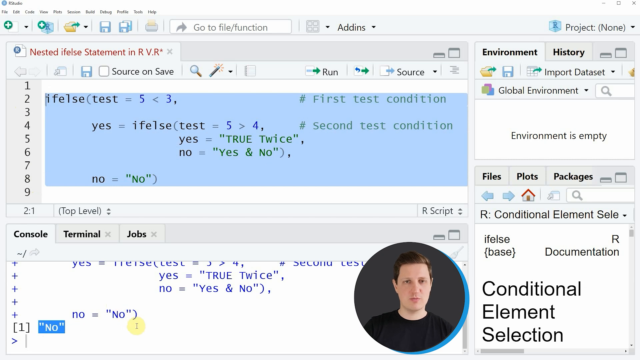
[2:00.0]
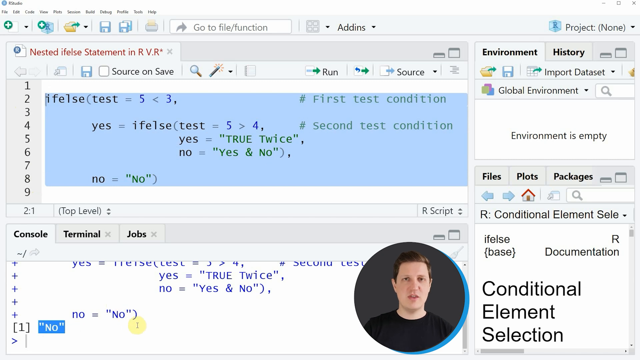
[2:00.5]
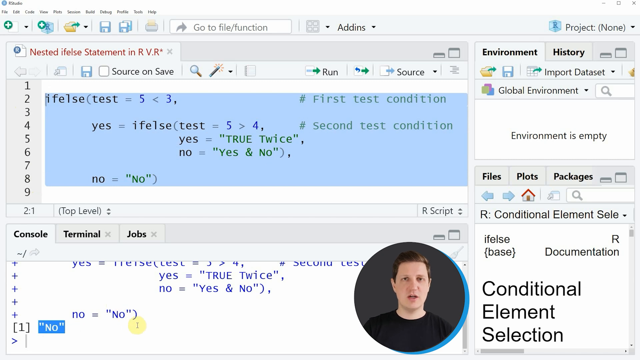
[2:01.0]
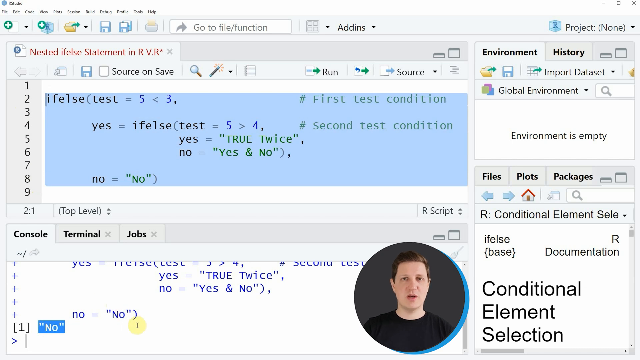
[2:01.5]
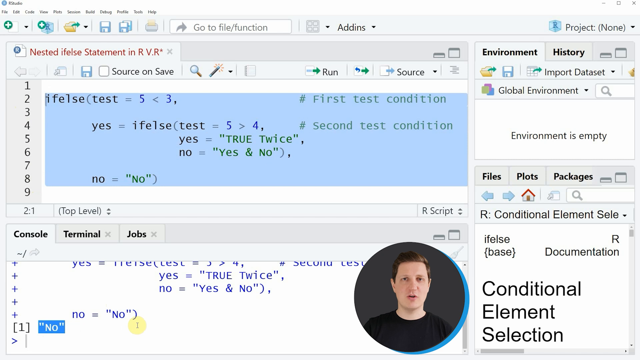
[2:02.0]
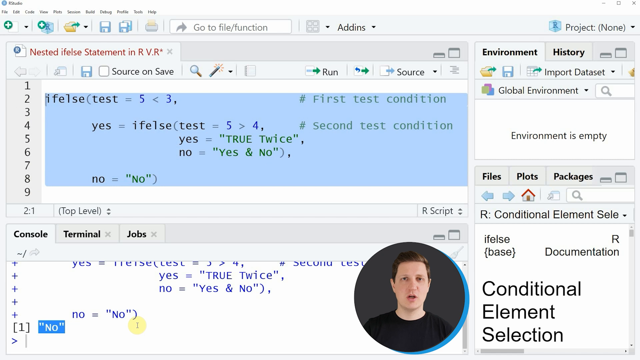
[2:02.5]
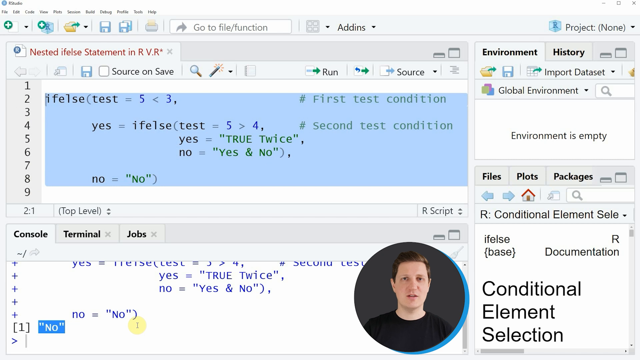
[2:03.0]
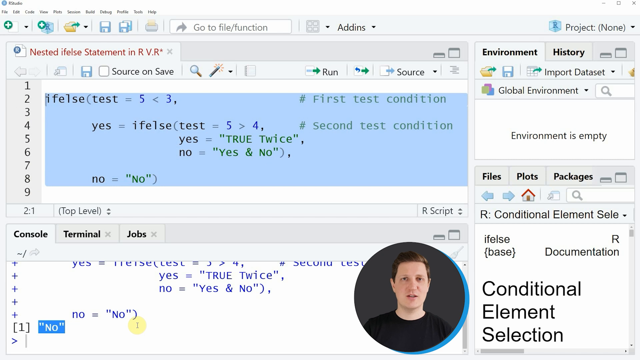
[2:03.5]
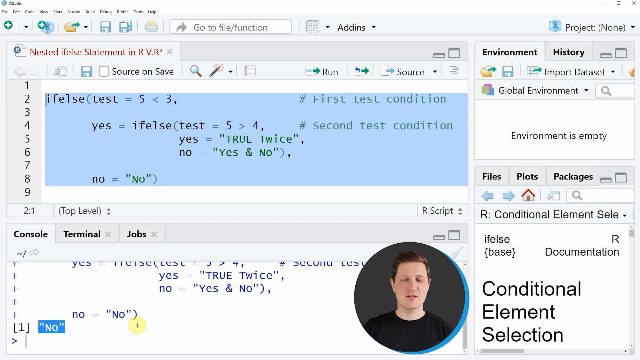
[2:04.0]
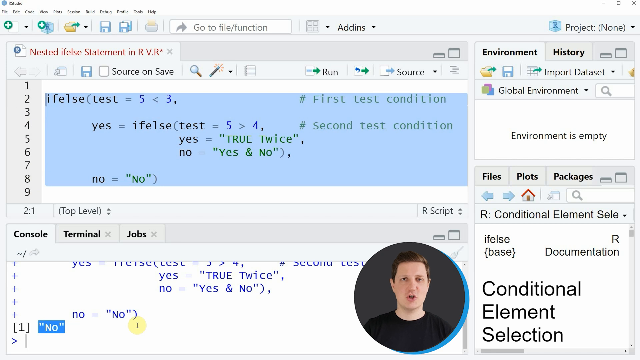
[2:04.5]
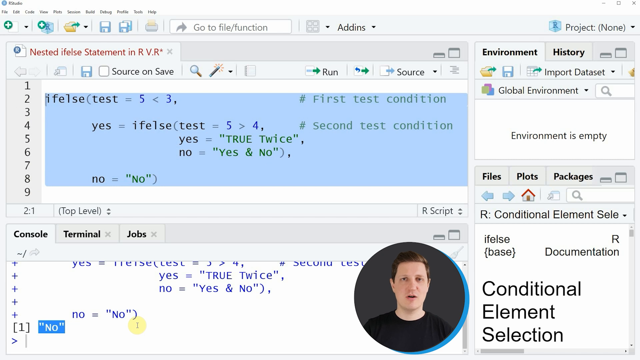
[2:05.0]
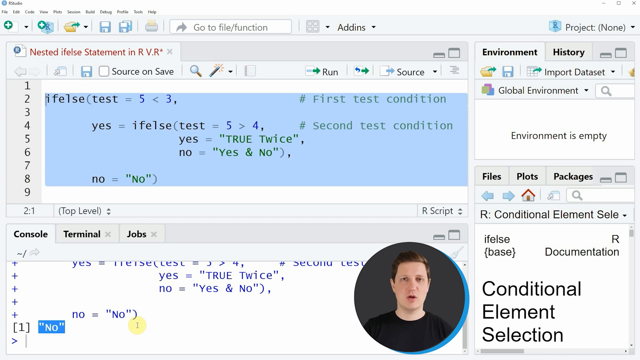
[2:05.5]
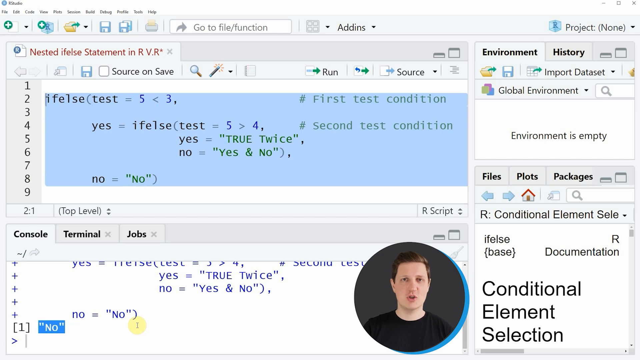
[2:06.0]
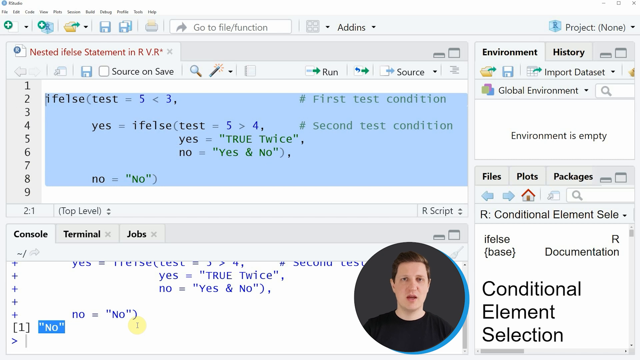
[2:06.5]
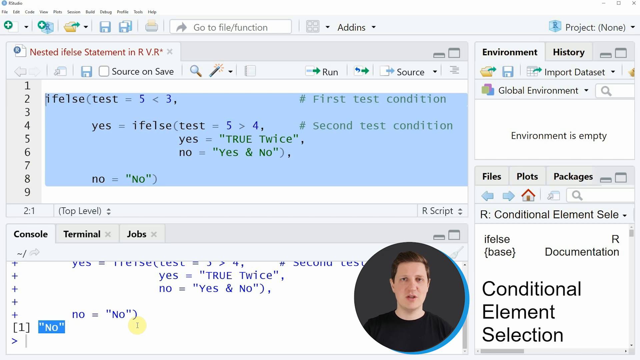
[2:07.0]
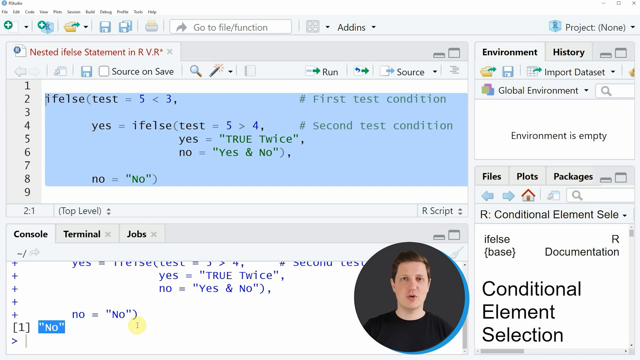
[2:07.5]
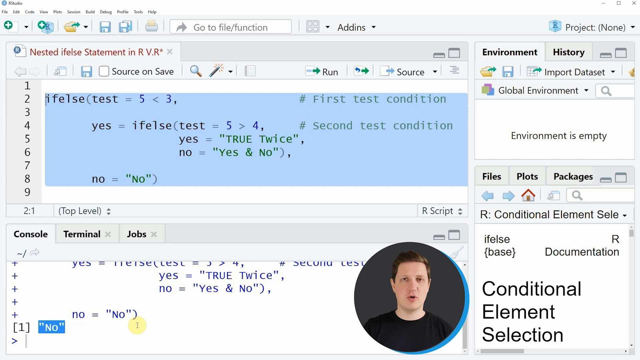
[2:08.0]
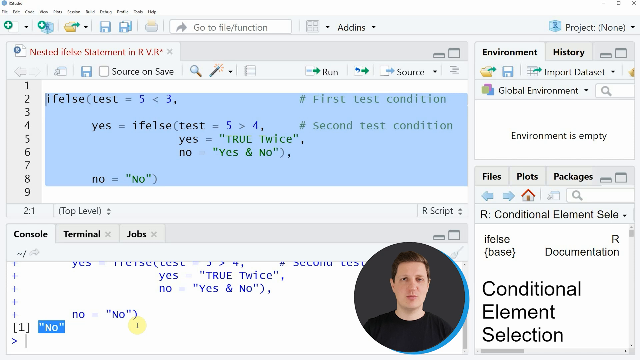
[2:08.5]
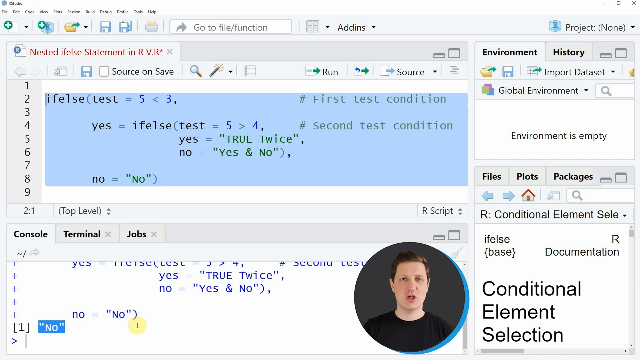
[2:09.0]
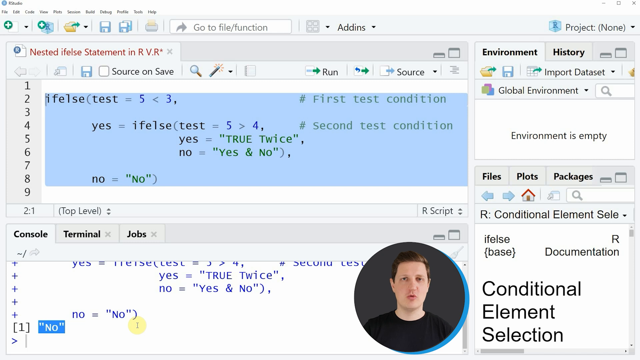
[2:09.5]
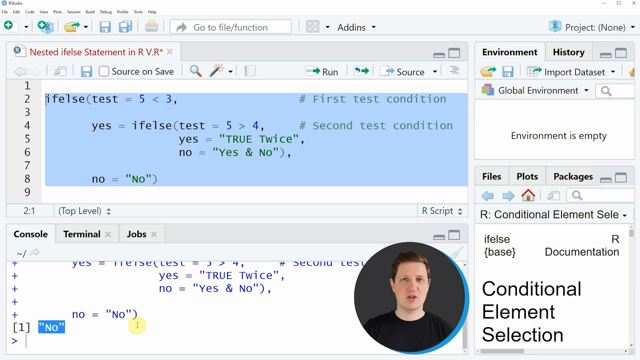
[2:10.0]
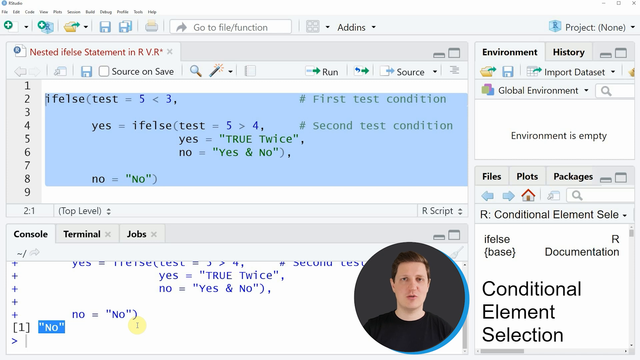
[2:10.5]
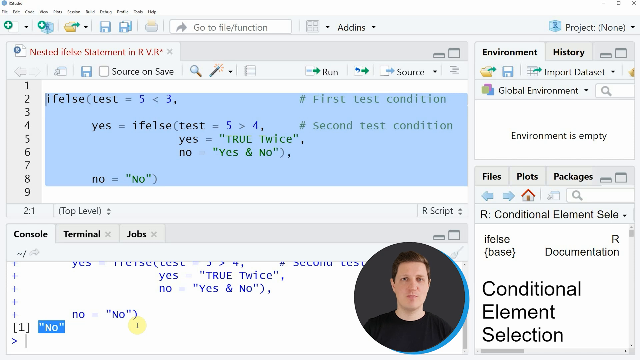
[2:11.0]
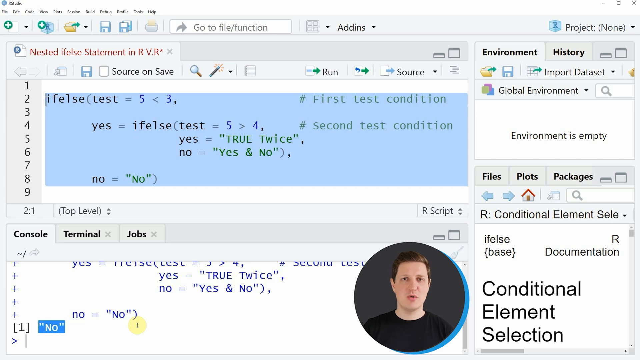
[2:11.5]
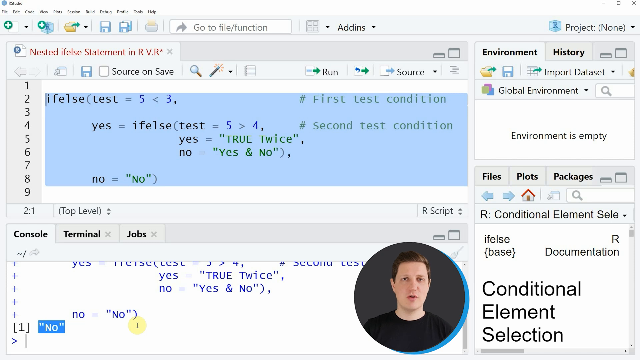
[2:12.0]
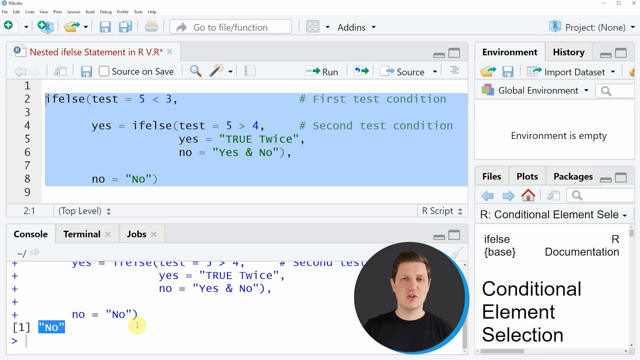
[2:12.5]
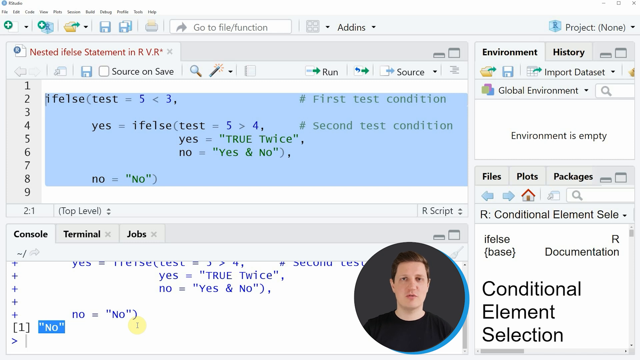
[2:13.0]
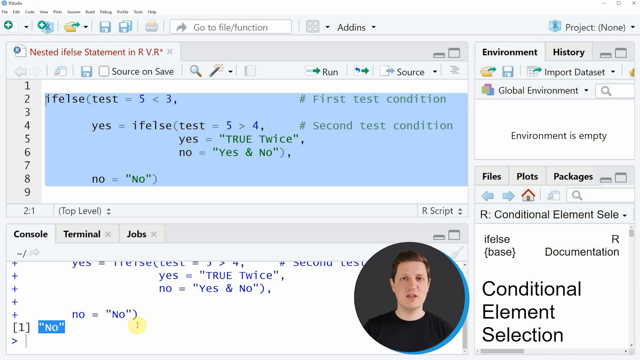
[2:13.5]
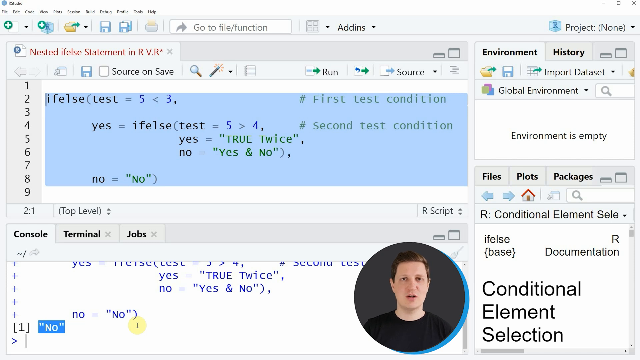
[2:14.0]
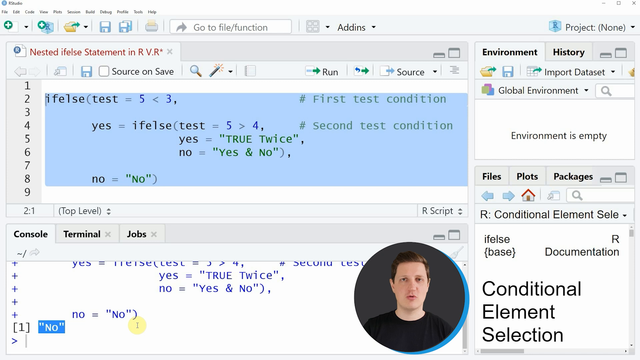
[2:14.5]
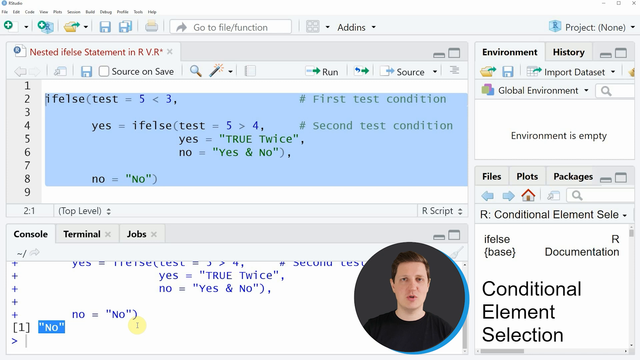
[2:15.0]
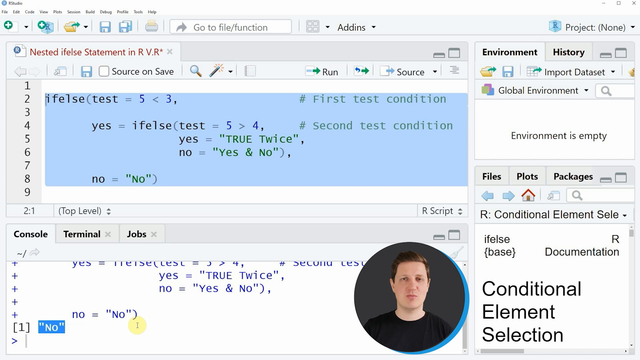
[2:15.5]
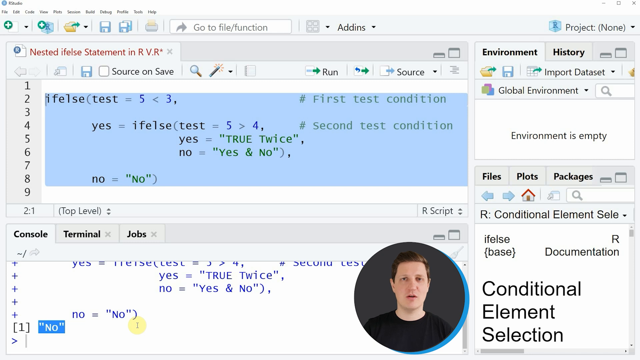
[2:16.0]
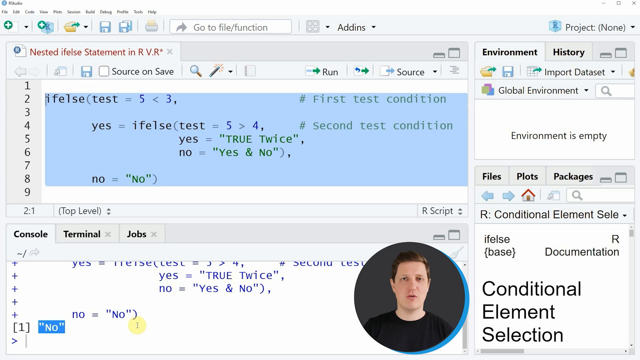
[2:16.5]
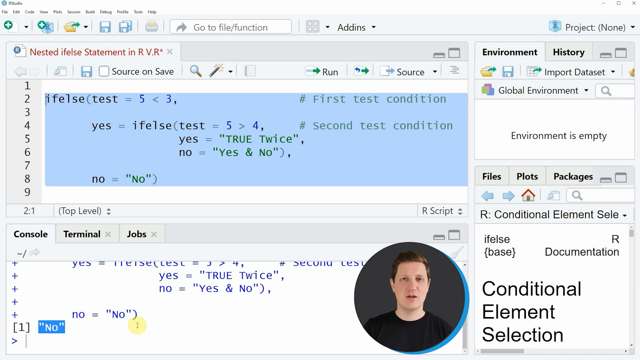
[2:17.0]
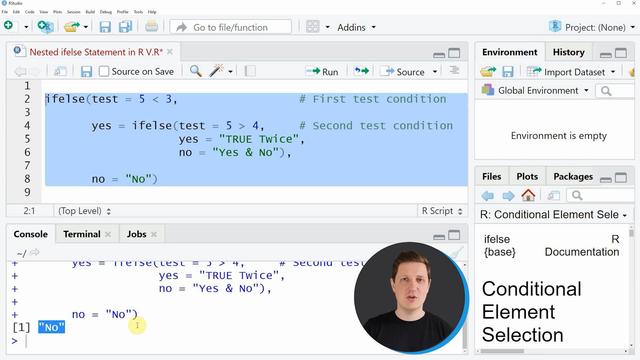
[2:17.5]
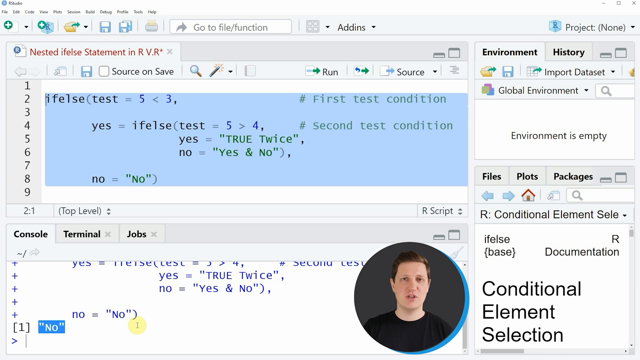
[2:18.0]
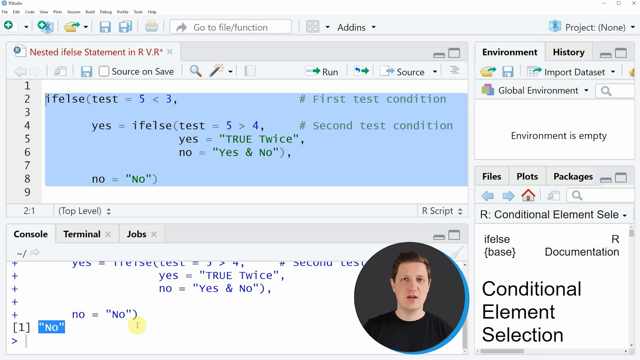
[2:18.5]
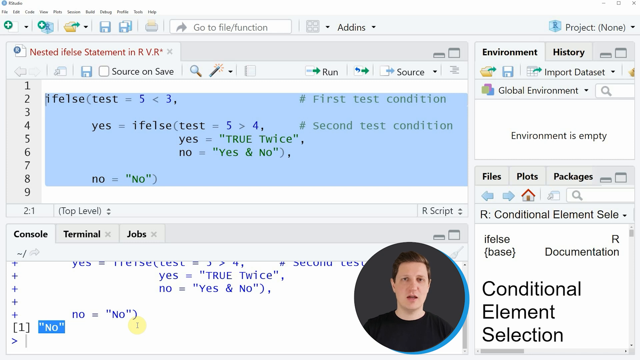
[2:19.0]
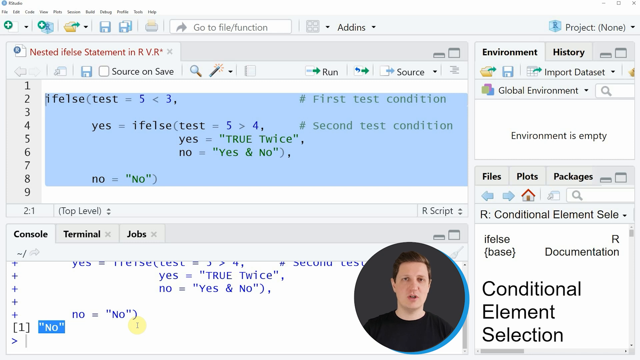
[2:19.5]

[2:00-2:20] Lines 2 through 8 in the nested ifelse statement in R V.R panel are selected and highlighted in light blue. In the console panel at the bottom left of the screen, the text "no", in quotes, on the last line is highlighted in blue. In the circle frame at the bottom right, the man is speaking, probably giving commentary on the process he is demonstrating. He is a white man with light brown hair wearing a black shirt, seen from his chest to the top of his head, against a grey background. He continues to speak, pretty emotionless, as he kind of stares forward.